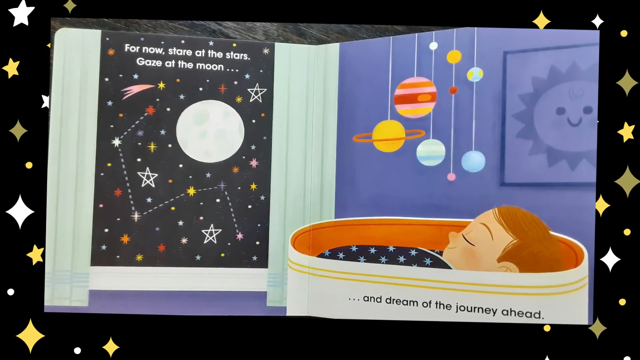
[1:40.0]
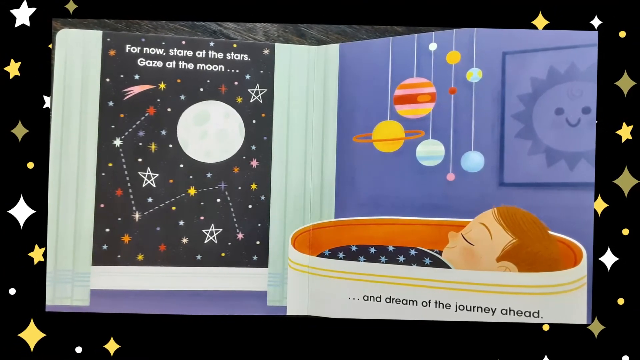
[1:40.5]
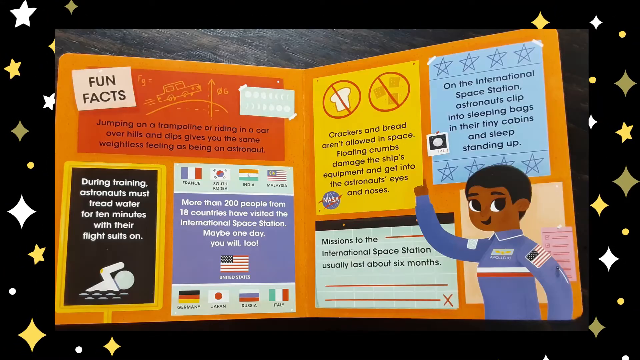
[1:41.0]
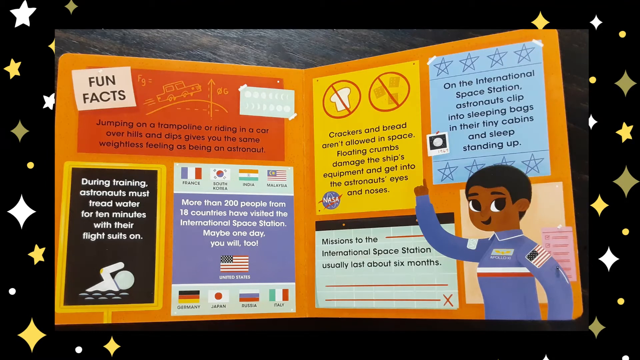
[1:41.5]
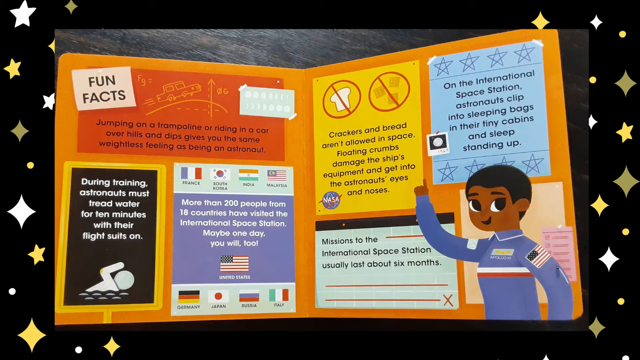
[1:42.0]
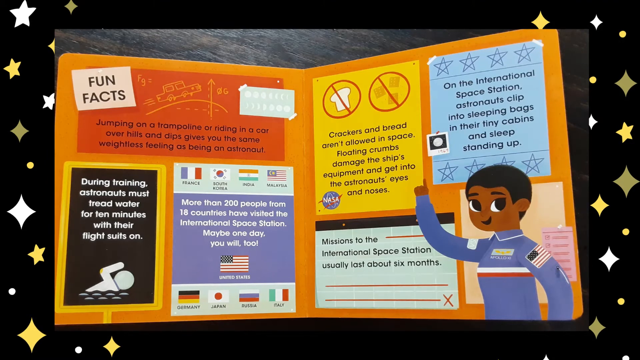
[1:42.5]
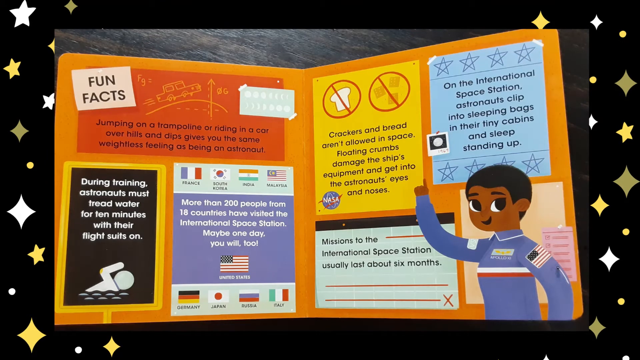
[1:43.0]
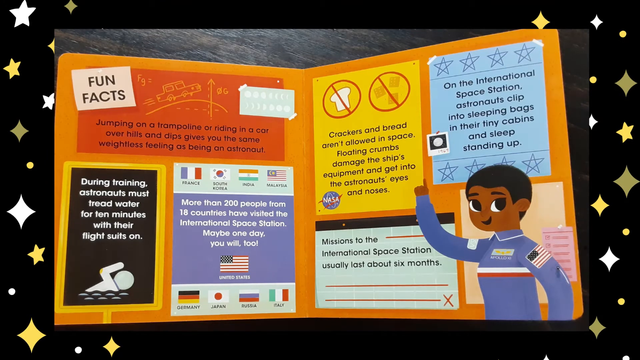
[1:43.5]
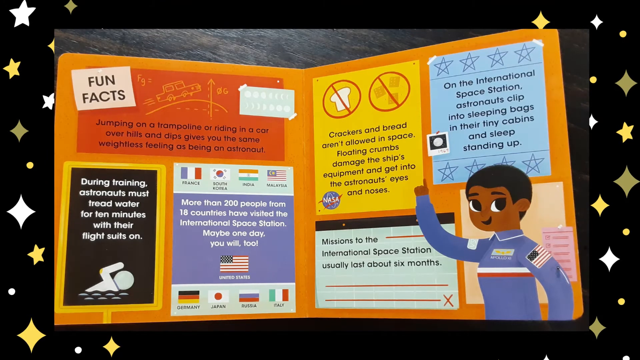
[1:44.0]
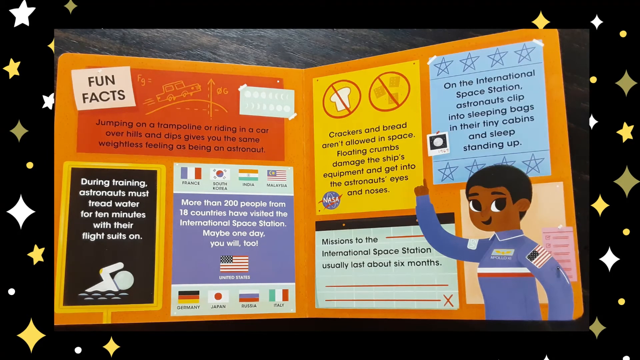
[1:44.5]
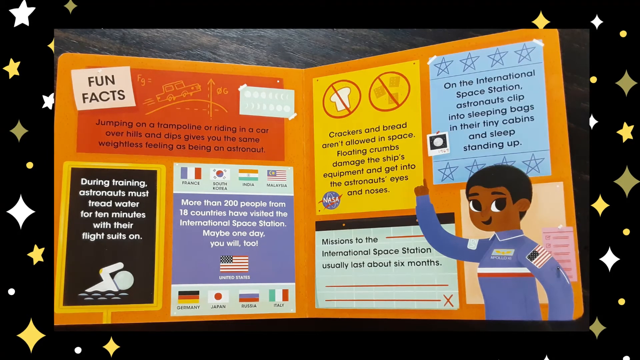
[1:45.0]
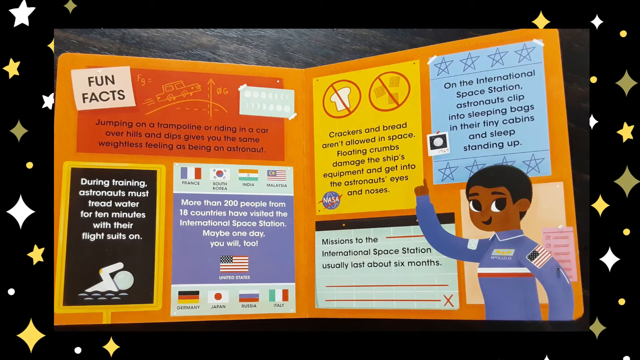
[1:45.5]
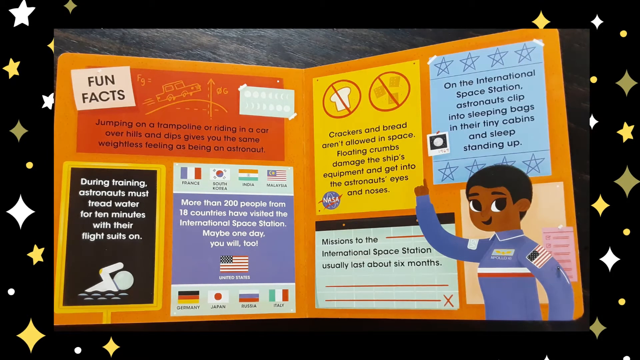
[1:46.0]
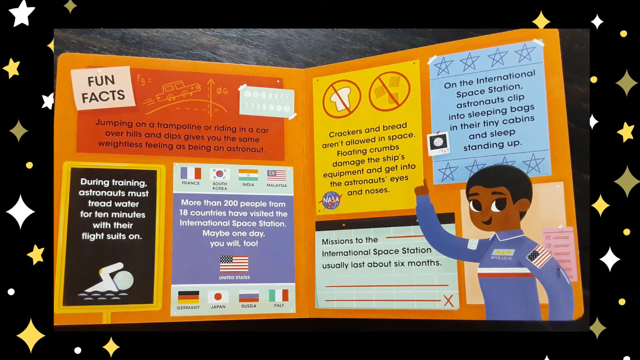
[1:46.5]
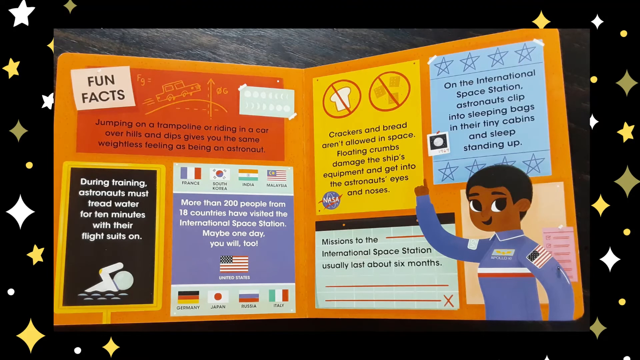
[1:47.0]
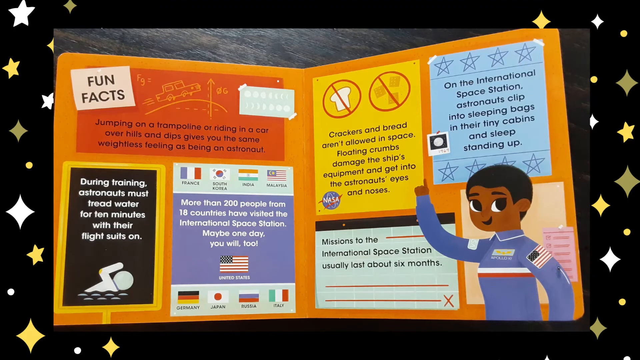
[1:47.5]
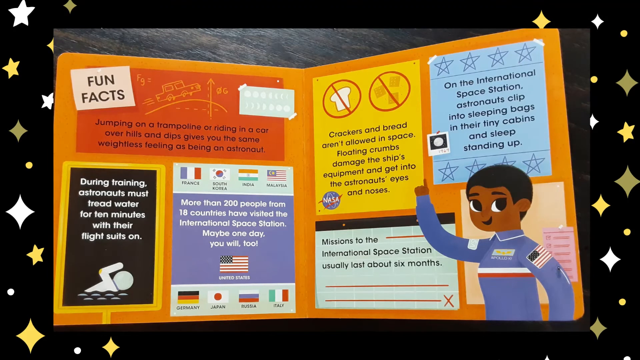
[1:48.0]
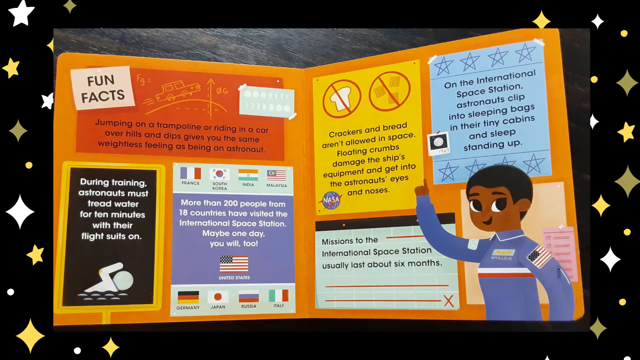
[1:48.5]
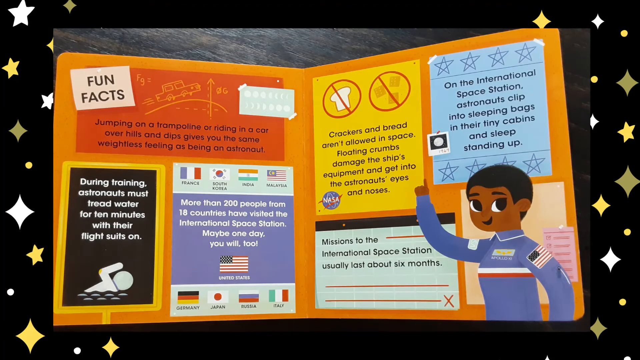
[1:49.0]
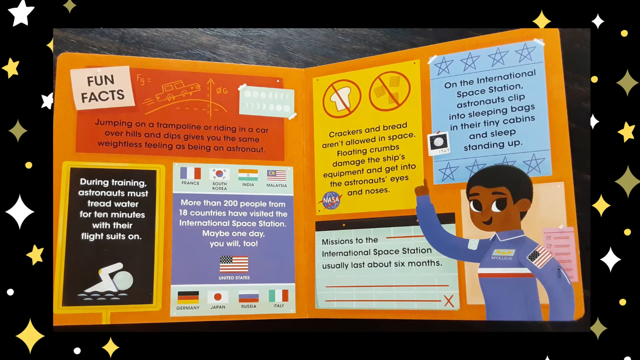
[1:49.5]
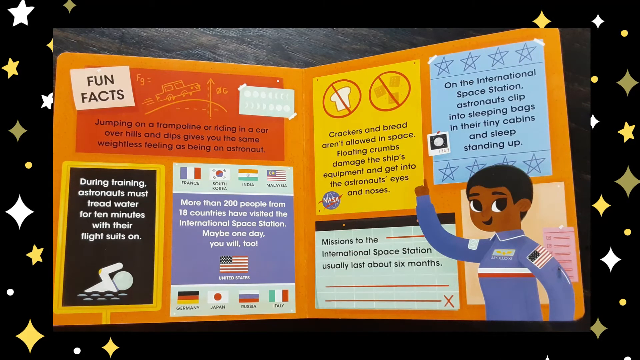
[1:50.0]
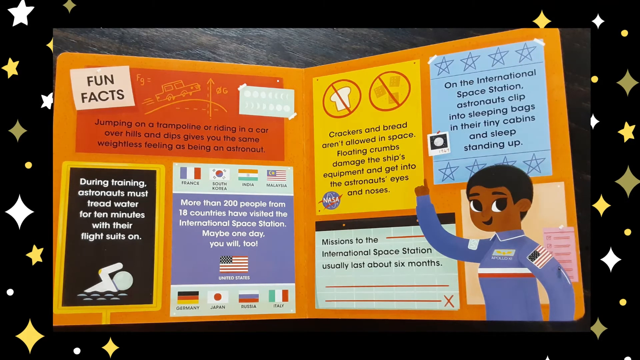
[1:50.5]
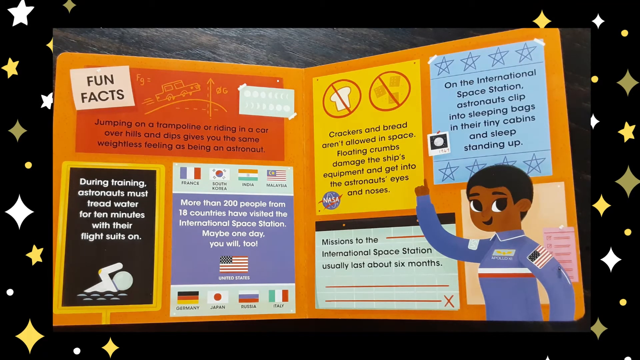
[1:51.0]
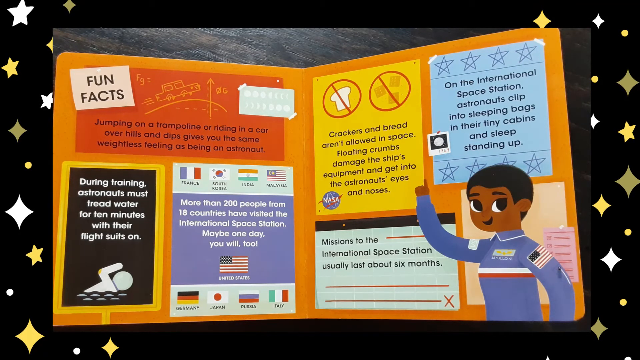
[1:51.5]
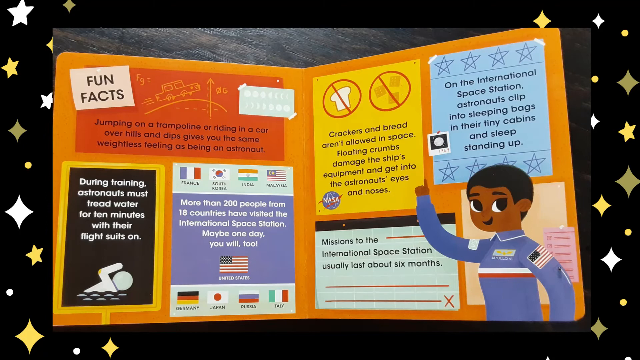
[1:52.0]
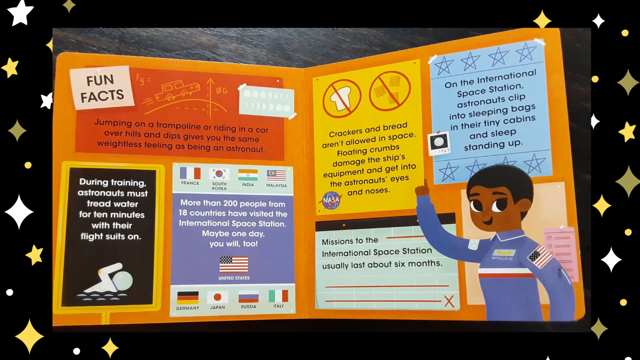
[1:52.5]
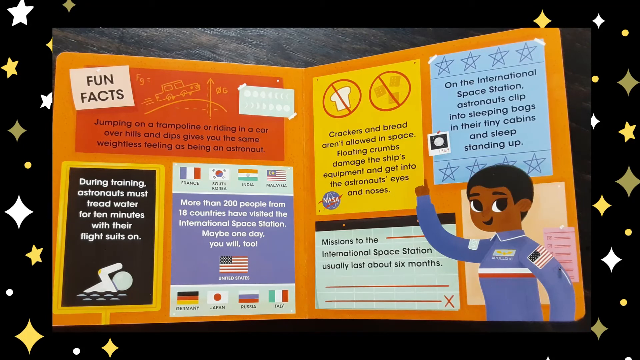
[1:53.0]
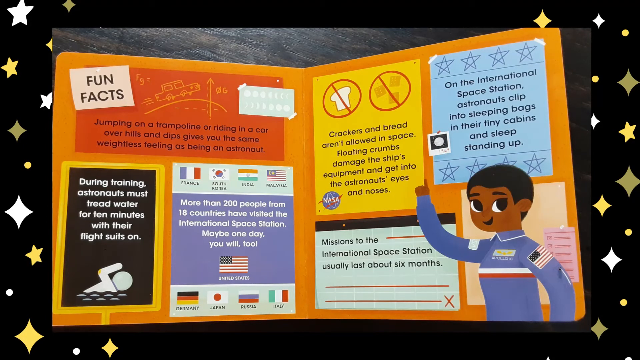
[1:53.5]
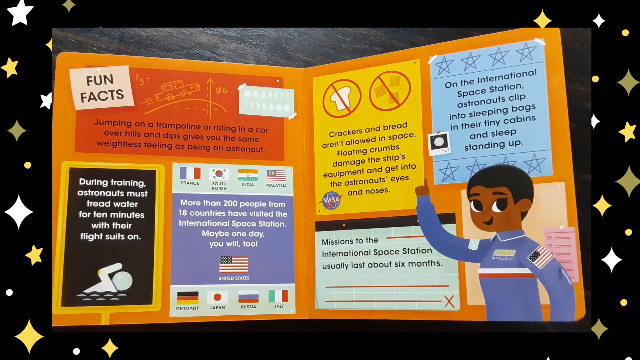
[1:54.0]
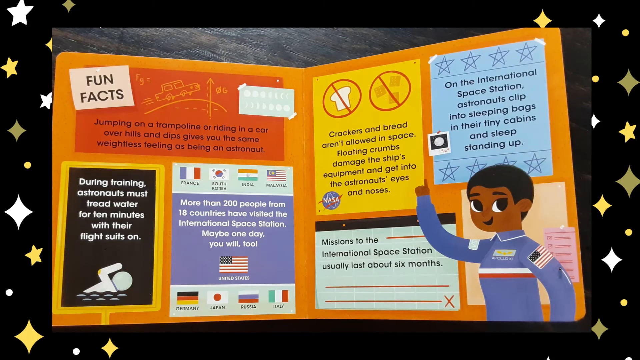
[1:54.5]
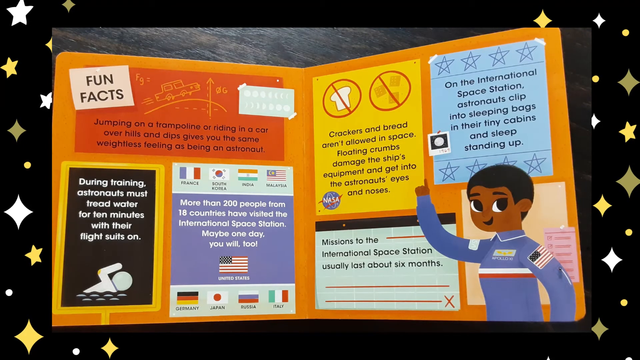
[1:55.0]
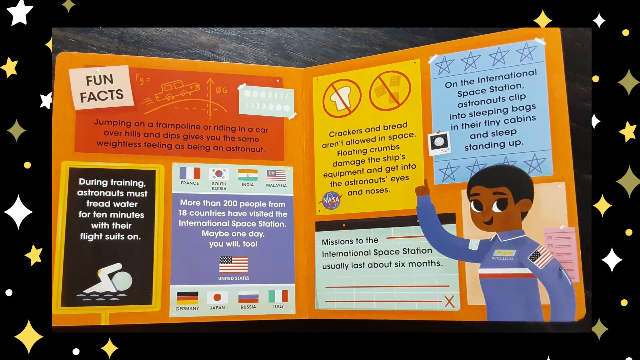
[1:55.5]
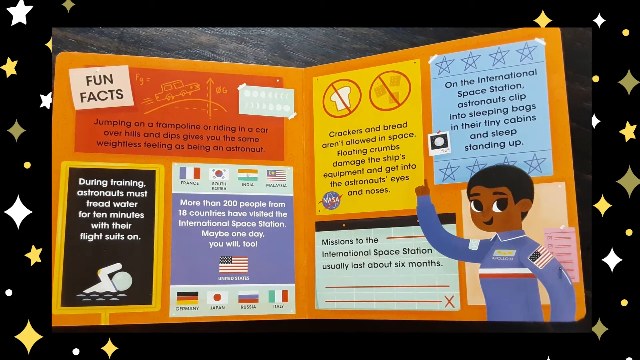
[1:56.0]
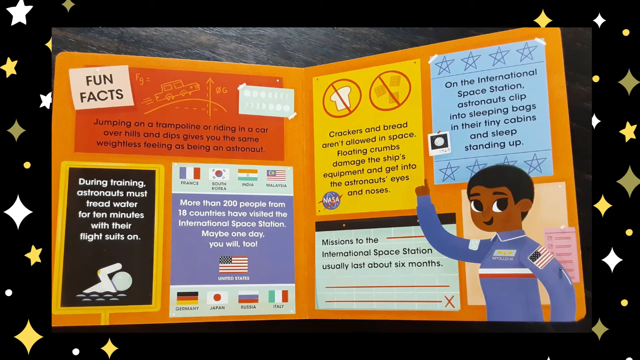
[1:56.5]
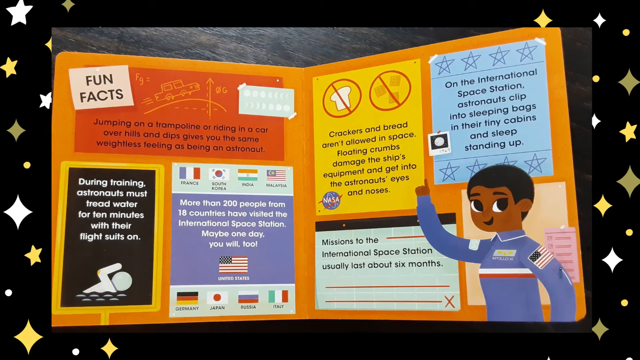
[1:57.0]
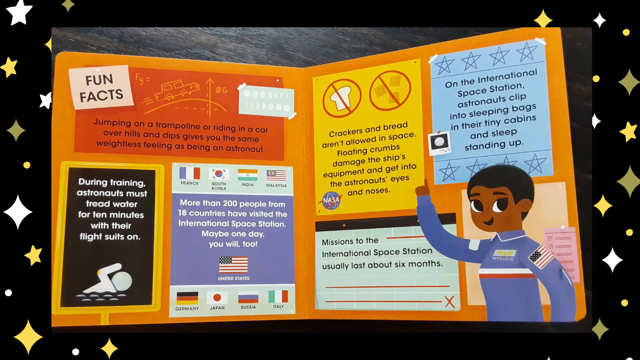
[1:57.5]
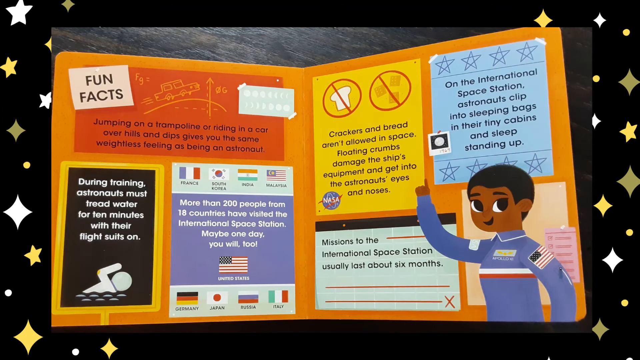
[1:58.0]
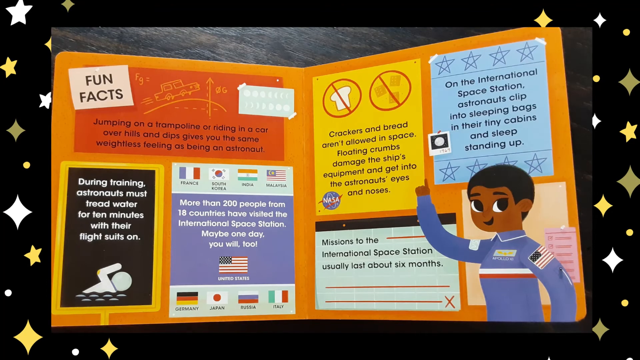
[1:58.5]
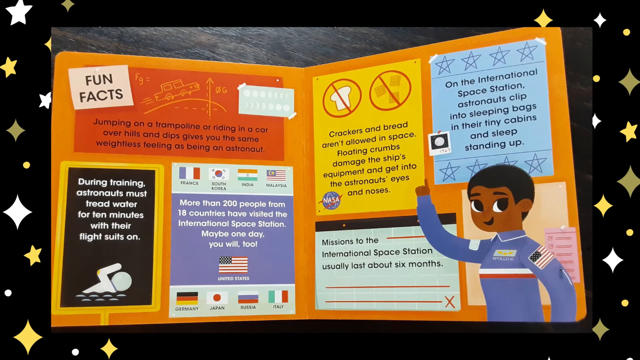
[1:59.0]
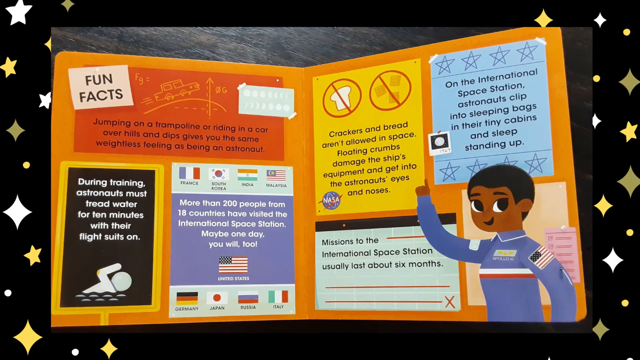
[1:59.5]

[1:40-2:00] The book is flipped to two pages, one with three boxes and one with four boxes. On the left-hand side, fun facts appear on an orange background with written information, along with a box with a black and yellow background and another box with flags and information. On the right-hand side is a NASA astronaut with four boxes: one yellow, one blue with stars, one blue with red dashes and lines, and one box the astronaut is standing near. The three boxes on the right have information written in black fonts.